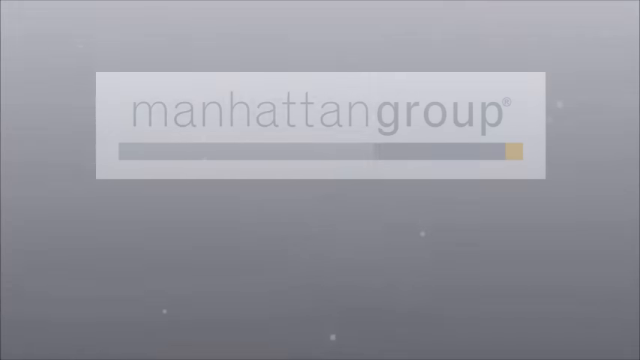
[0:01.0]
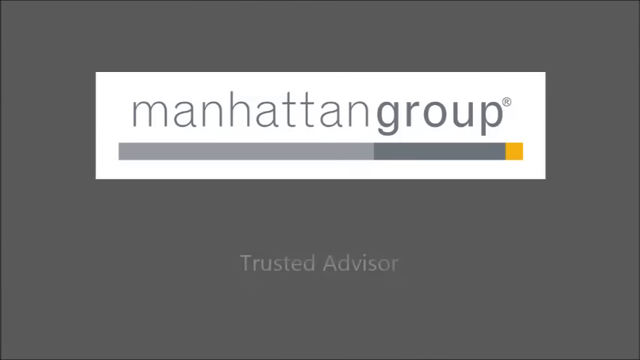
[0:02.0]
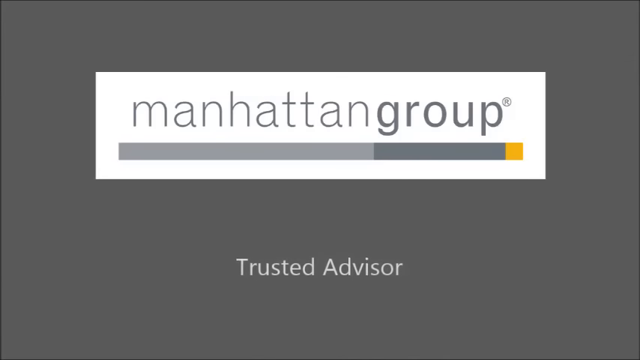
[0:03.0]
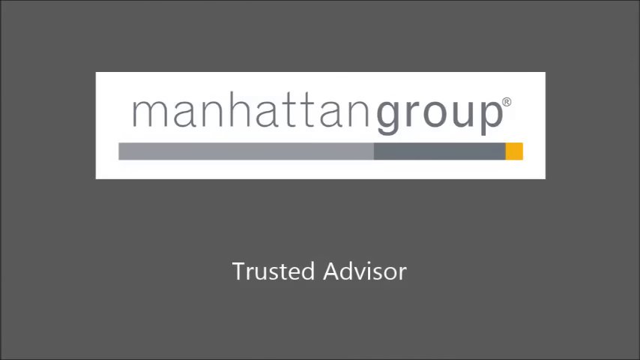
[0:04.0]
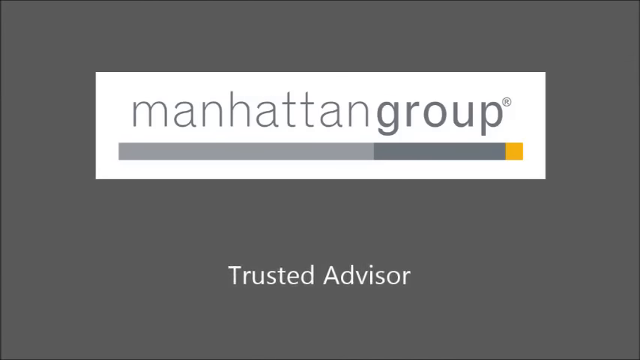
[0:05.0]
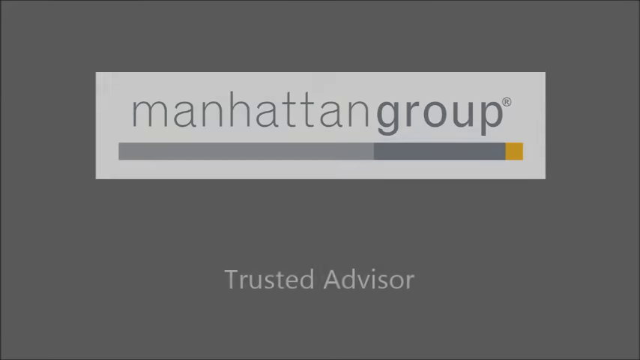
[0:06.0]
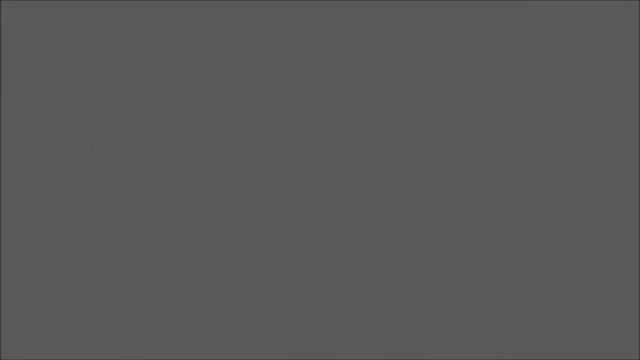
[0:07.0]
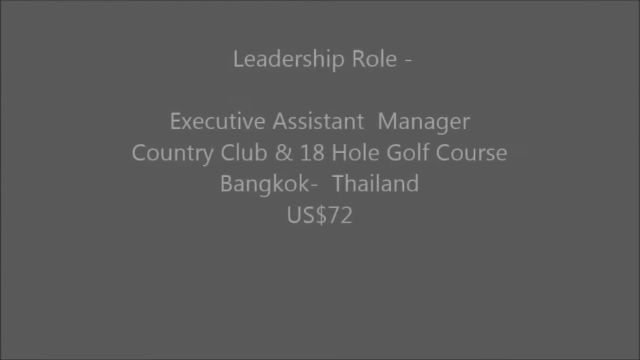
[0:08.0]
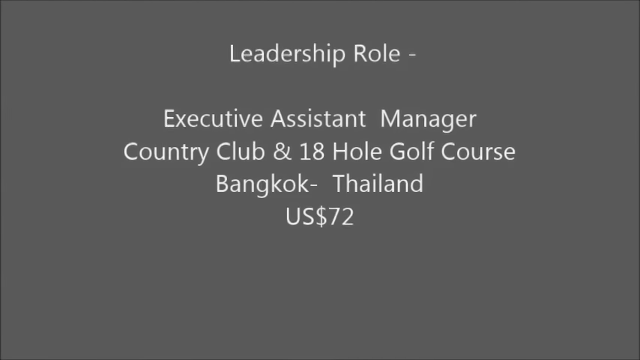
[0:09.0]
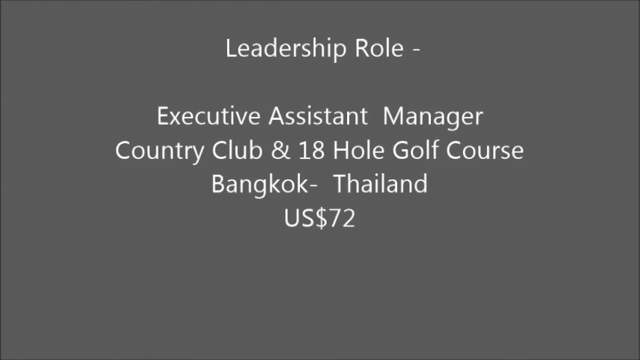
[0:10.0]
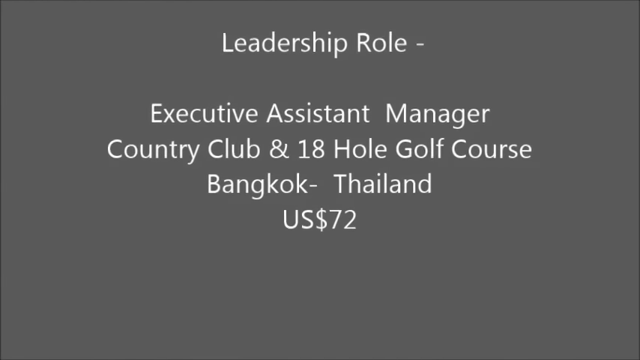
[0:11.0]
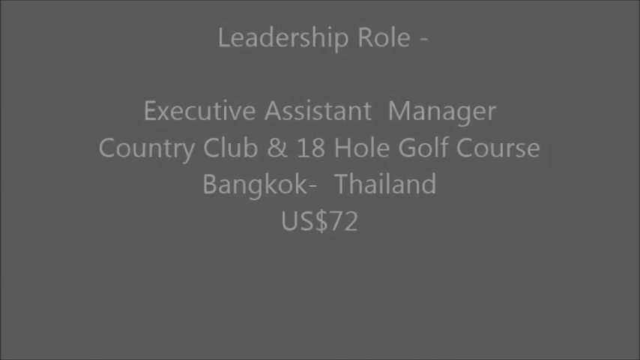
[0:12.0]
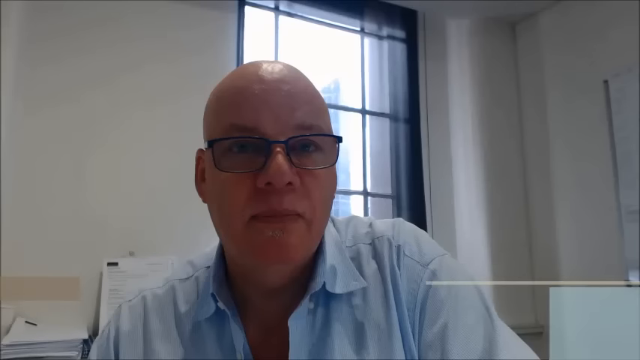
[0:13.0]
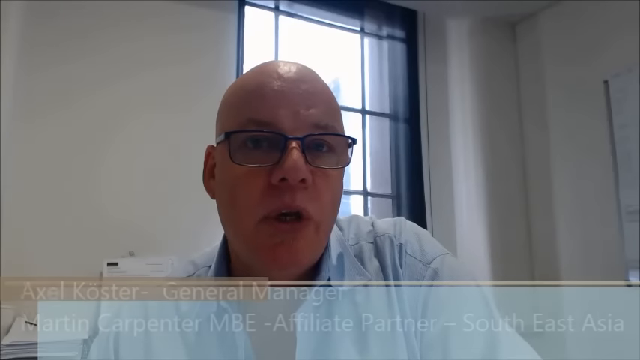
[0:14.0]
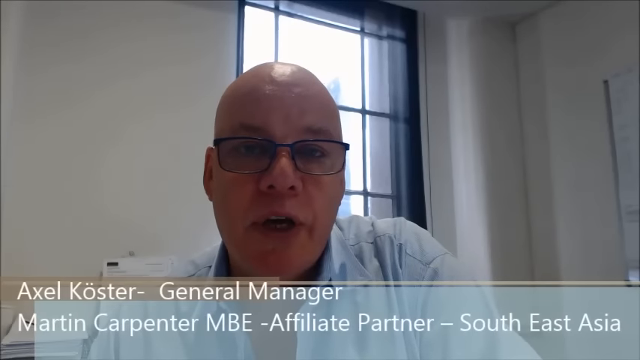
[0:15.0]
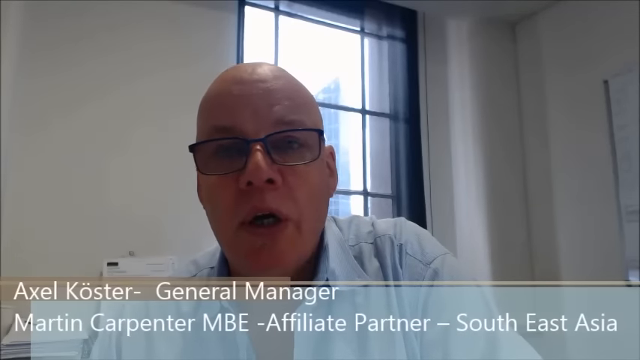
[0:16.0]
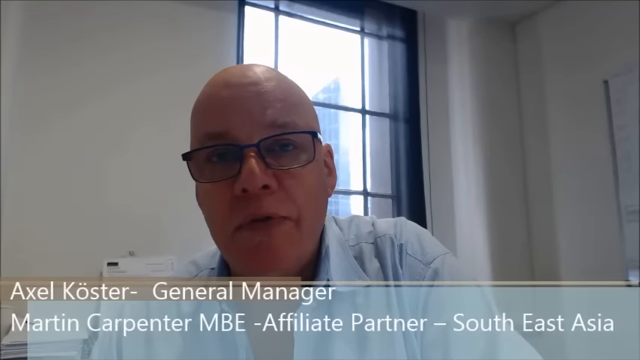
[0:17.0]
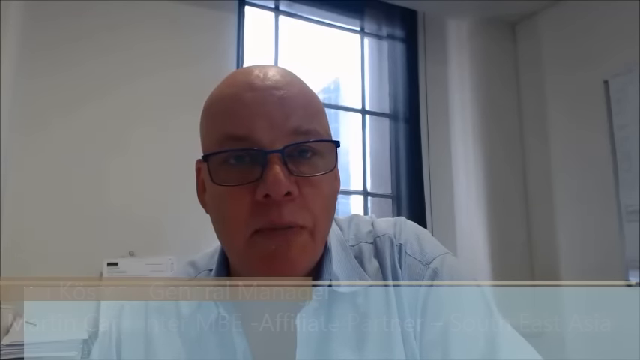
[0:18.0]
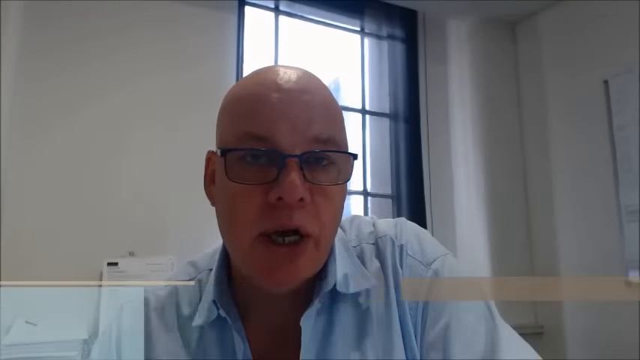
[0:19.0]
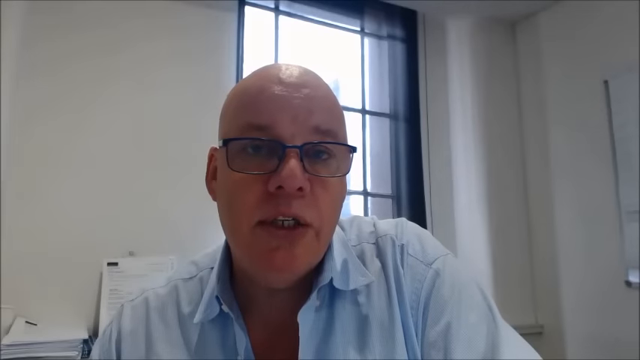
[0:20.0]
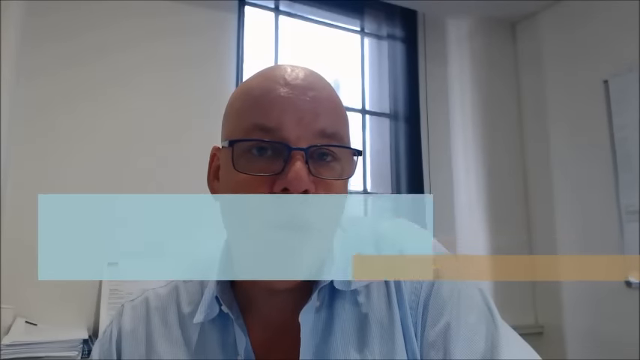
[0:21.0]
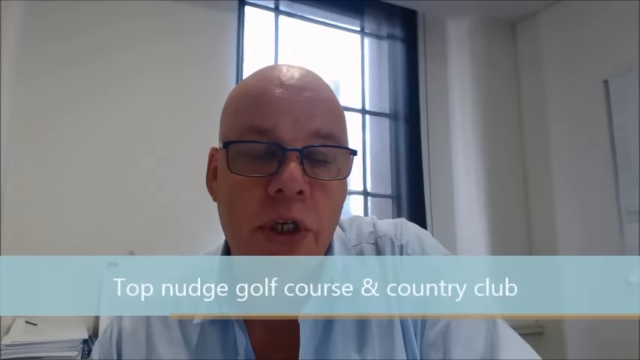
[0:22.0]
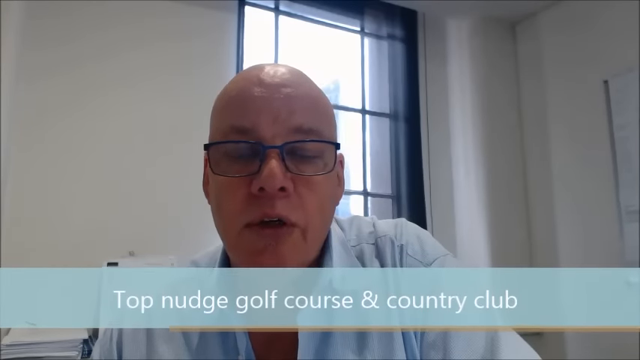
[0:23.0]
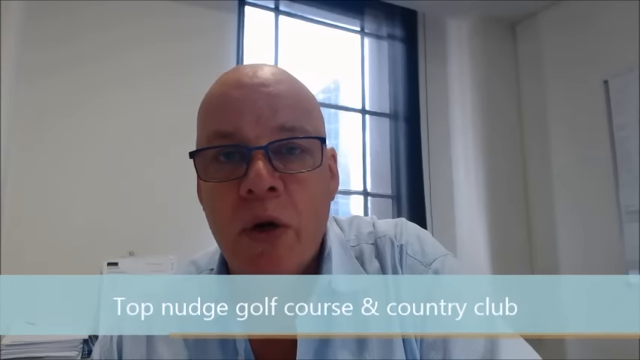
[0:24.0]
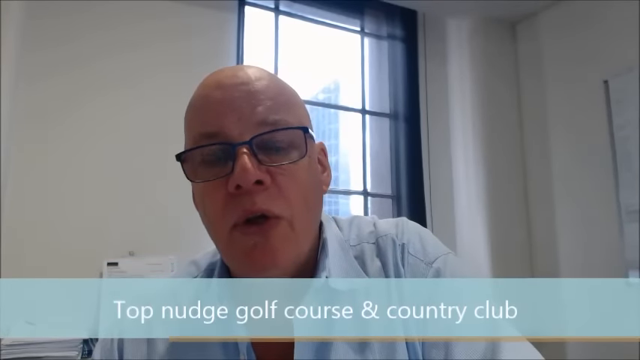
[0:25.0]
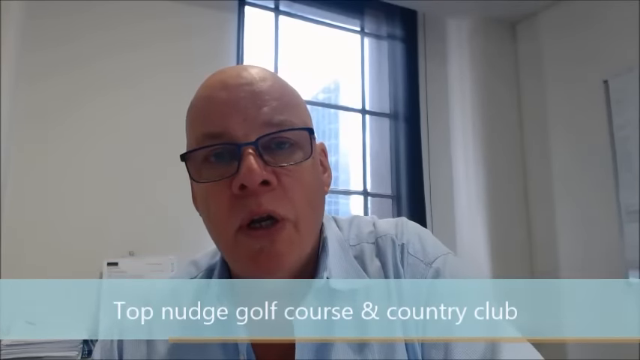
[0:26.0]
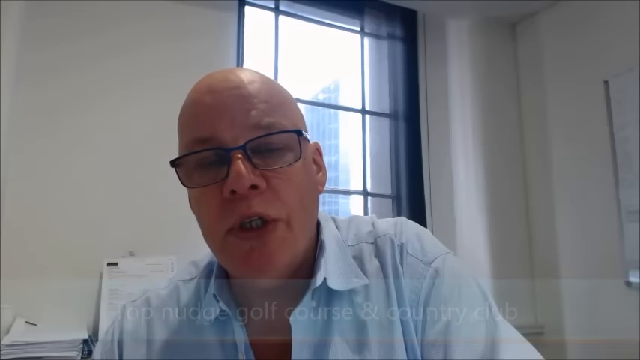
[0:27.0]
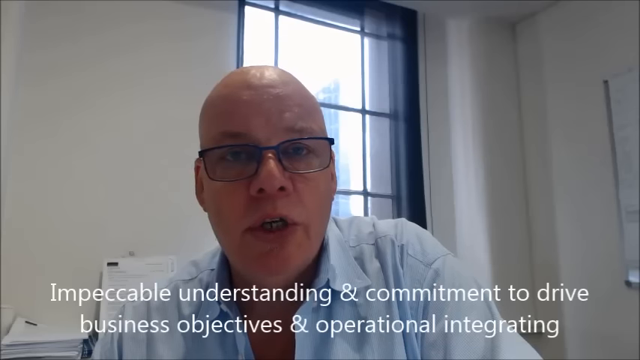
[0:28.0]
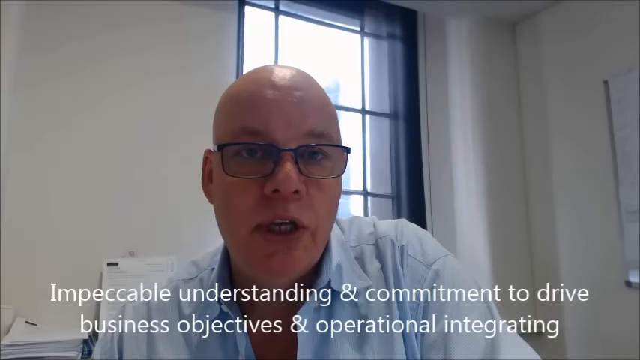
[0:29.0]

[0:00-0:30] The video is an advertisement for the Manhattan Group, Trusted Advisor. On a gray screen, text reads "Leadership Role, Executive Assistant Manager, Country Golf Course, Bangkok, Thailand, US, $72." Names follow: Axel Koster, General Manager, and Martin Carpenter, MBE, Affiliate Partner, Southeast Asia. A man is speaking and appears to be on a Zoom meeting. He says something about a top-notch golf course and country club. He wears glasses and is sitting in front of a window through which the outside is visible; there might be a big building there. He says "an impeccable understanding and commitment to drive business objectives and operational integrity."